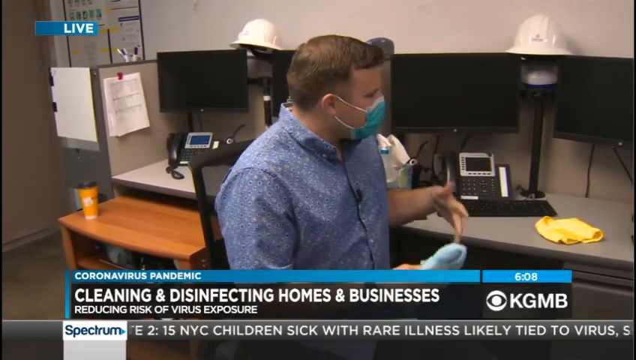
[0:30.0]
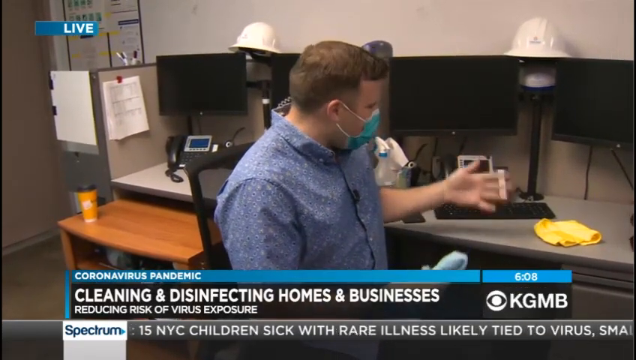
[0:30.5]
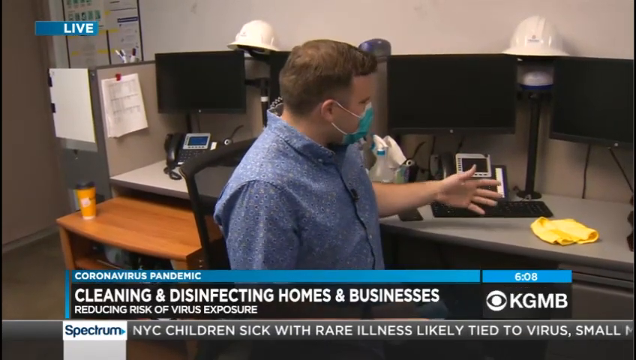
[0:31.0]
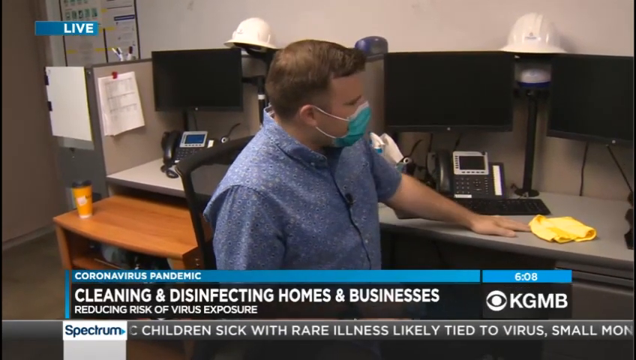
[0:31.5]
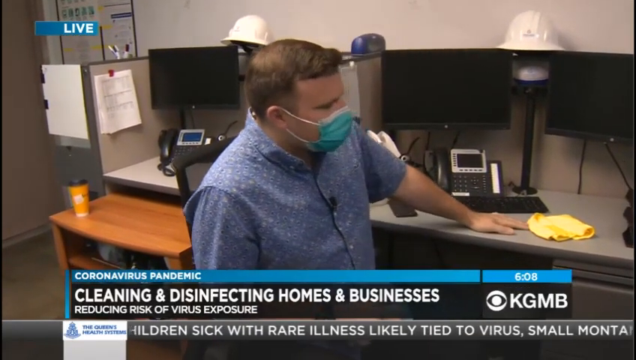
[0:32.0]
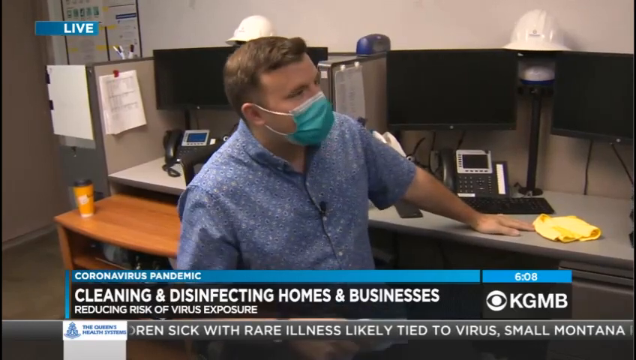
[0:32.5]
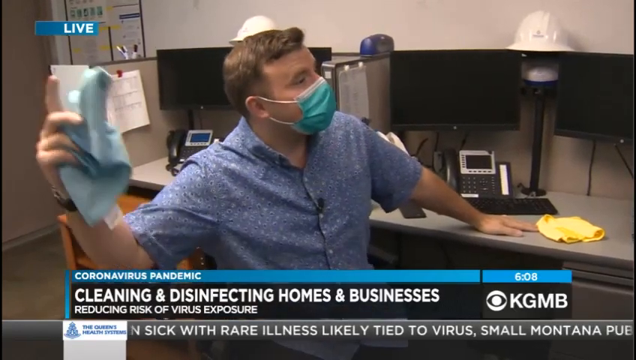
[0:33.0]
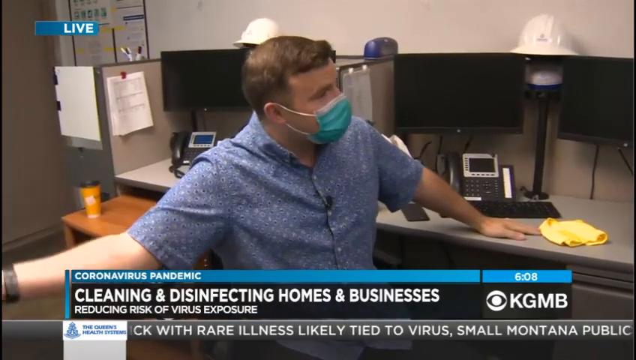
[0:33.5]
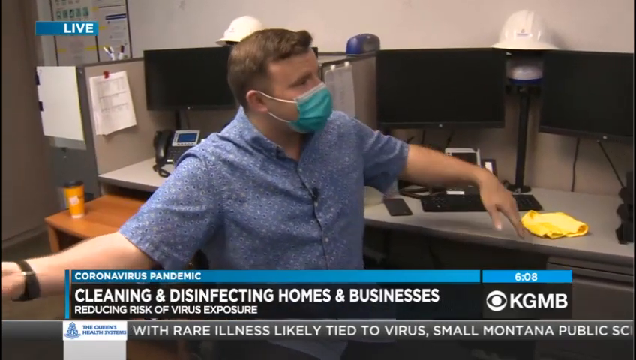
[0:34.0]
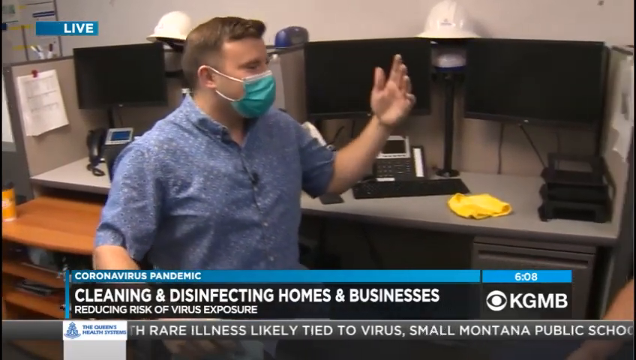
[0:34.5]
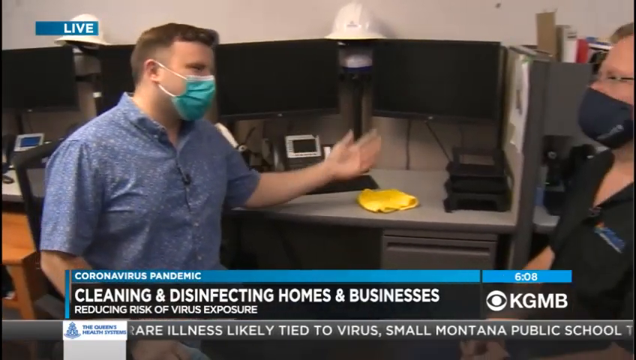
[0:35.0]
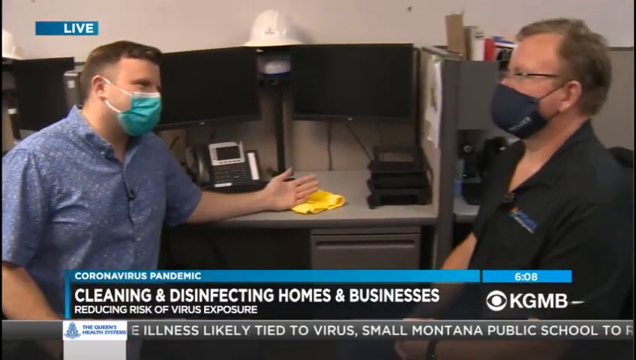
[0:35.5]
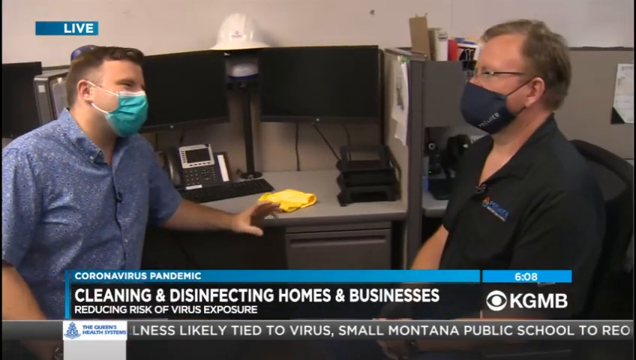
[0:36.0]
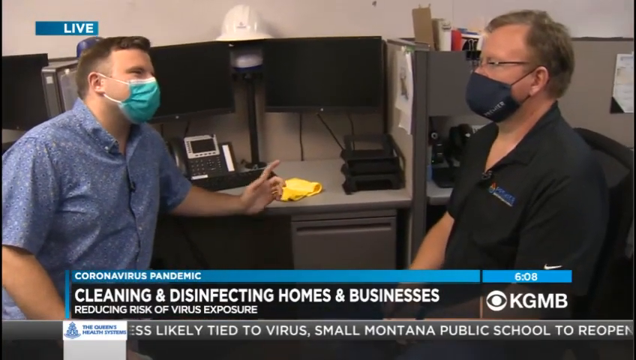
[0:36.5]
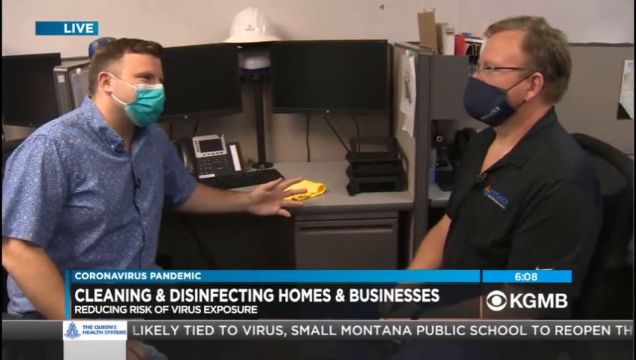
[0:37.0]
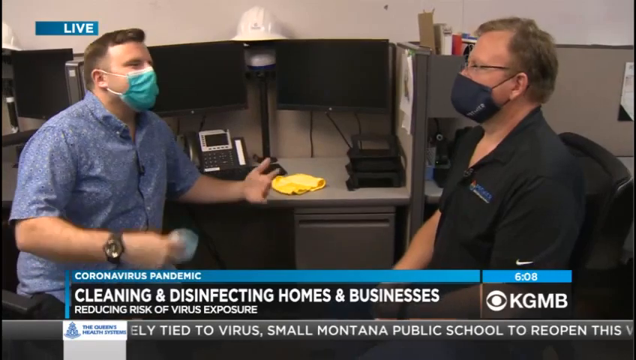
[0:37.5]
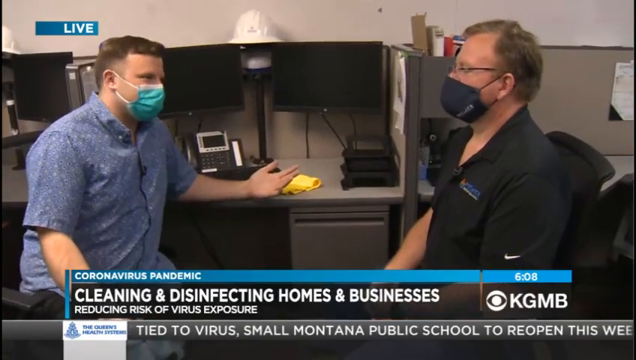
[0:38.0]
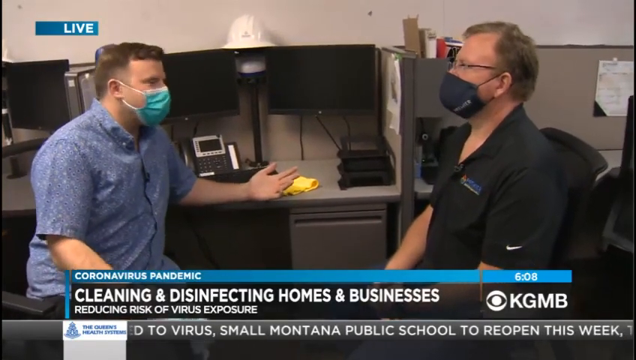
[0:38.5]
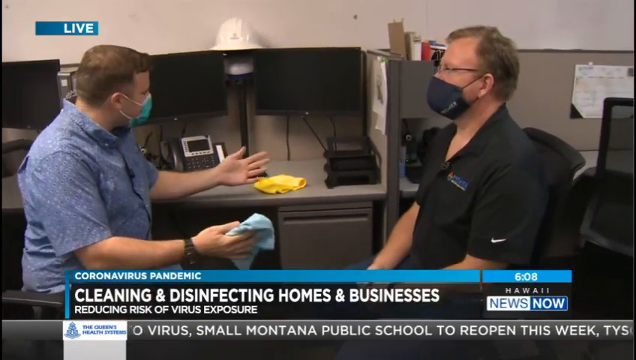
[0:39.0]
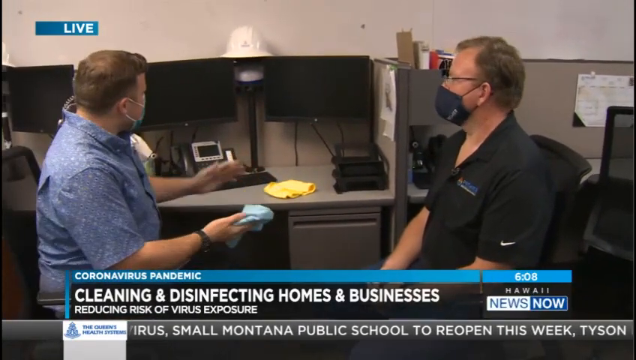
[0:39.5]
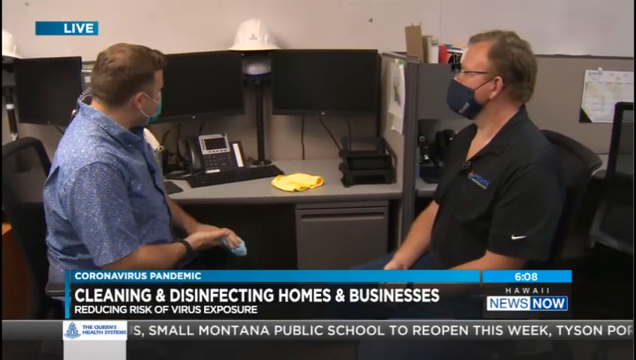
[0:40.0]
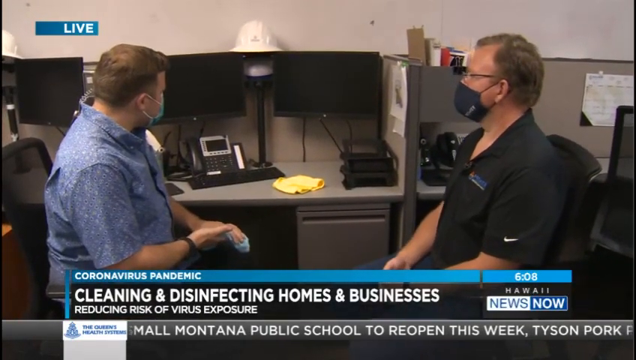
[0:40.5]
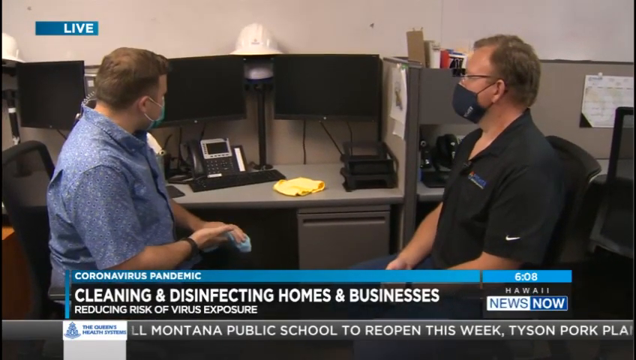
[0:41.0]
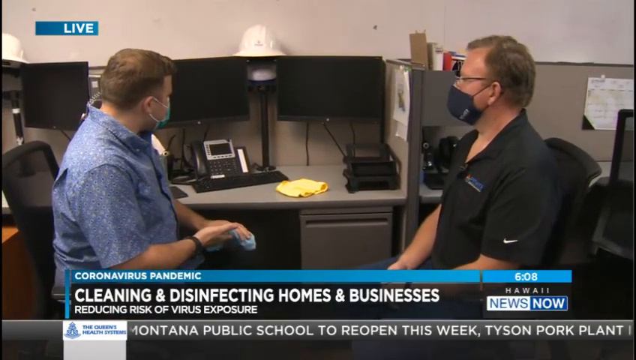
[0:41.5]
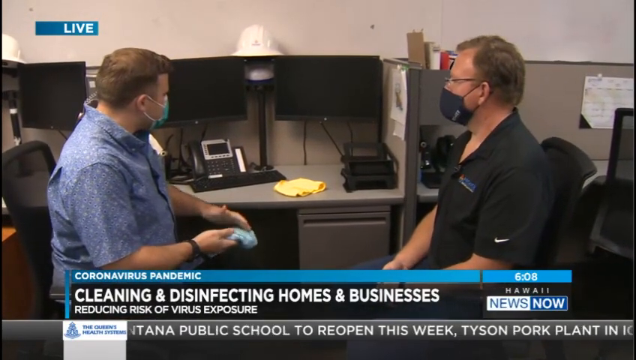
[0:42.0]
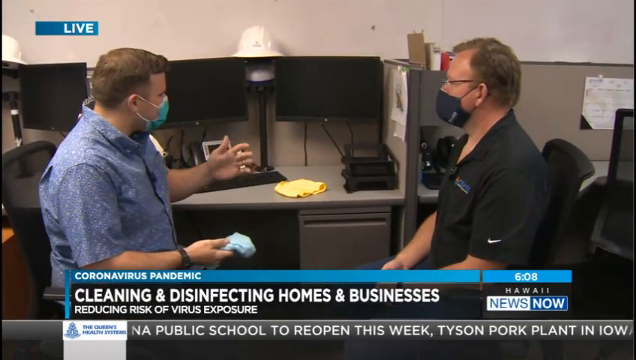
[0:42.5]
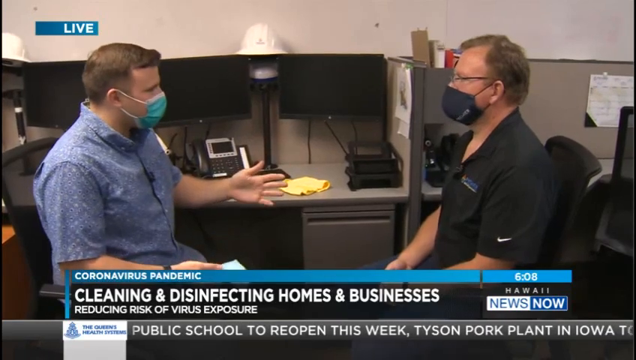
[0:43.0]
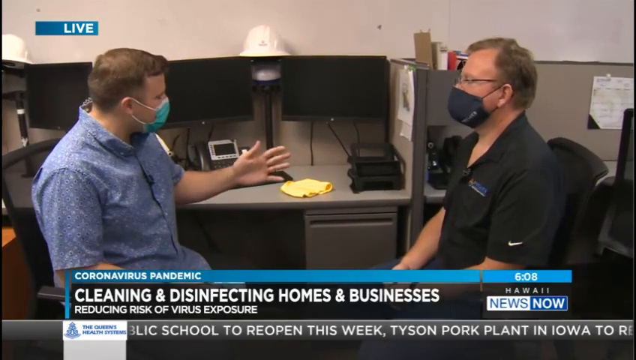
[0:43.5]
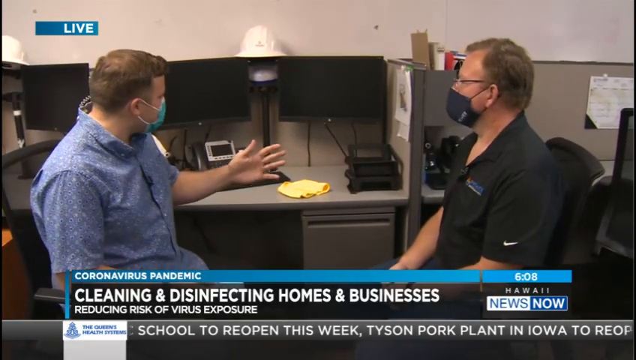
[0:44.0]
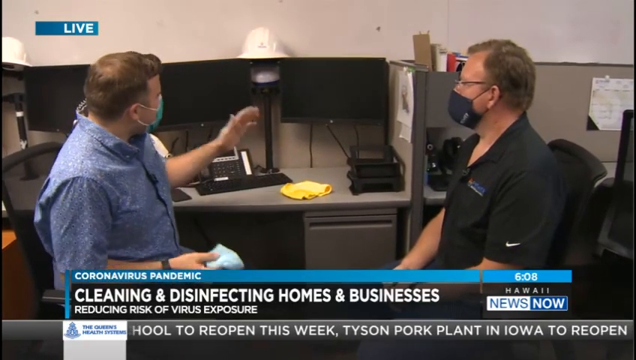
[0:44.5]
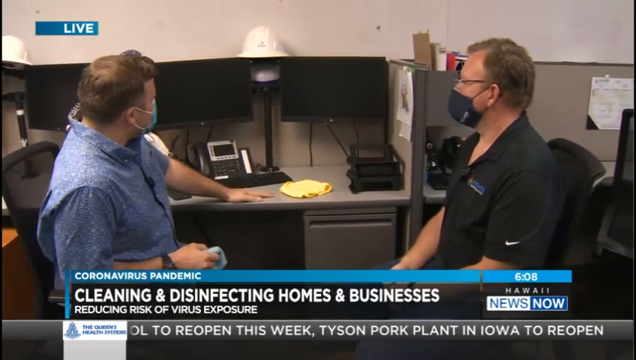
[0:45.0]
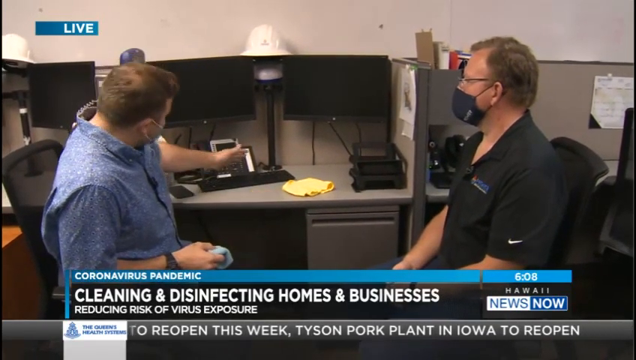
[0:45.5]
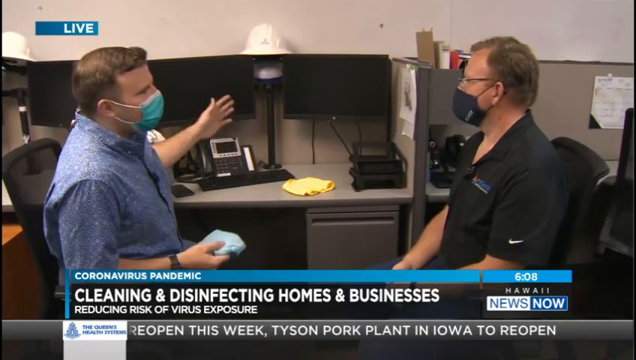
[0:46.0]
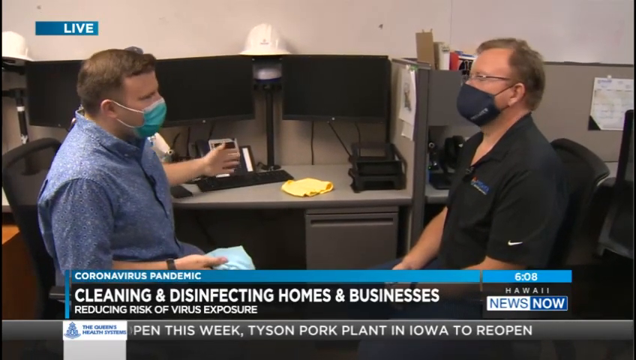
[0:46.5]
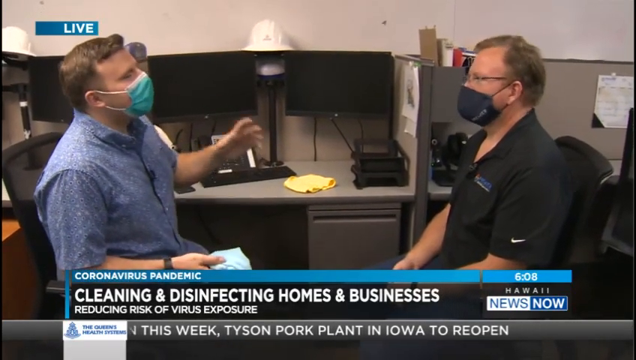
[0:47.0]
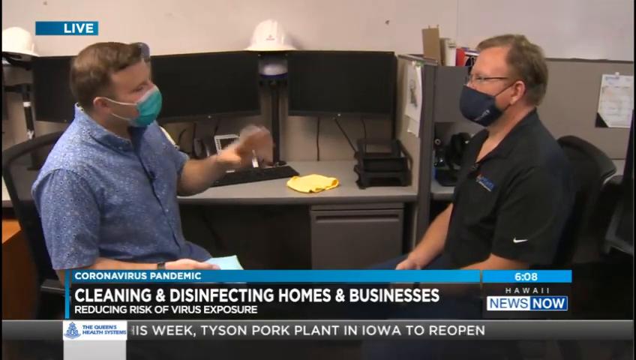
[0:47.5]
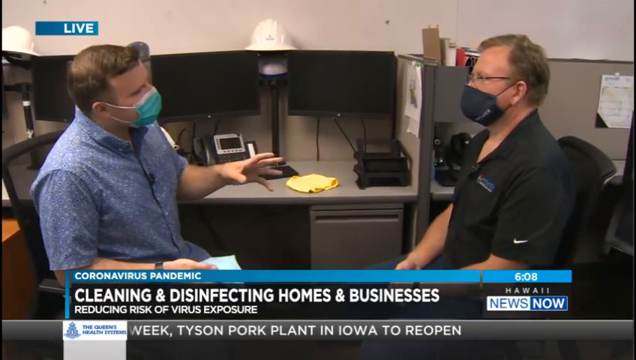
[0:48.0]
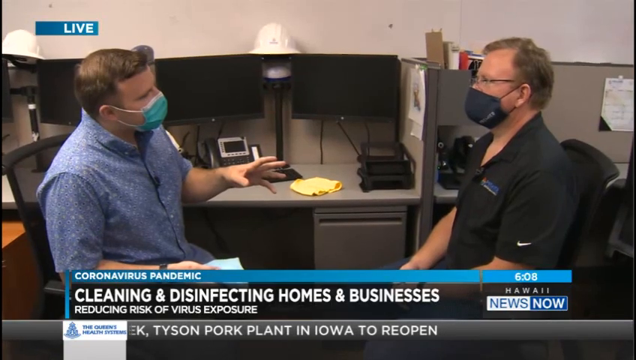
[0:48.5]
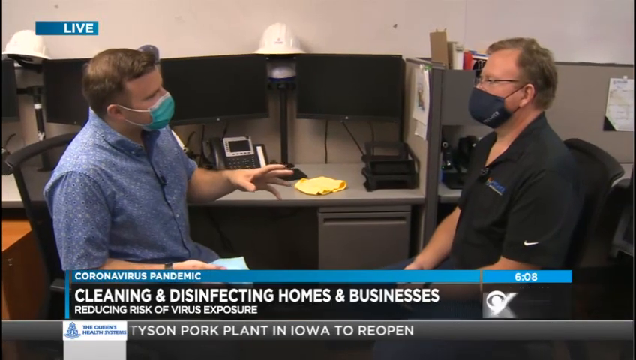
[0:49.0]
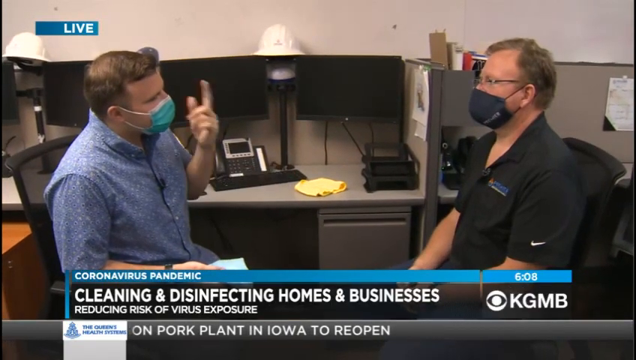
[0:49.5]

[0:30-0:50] The man remains full screen in the indoor setting, with several computer monitors, telephones and a desk behind him. He wears a face mask. The view then reveals more of the right side of the frame, where another man, also wearing a face mask, is sitting in front of him. The first man keeps speaking and making hand gestures. News updates along the bottom center of the screen read "travel may not resume until 2021", "Update 2", "15 NYC children sick with rare illness likely tied to virus", "Small Montana public school to reopen this week" and "Tyson pork plant in Iowa to reopen". The video is rectangular and filmed indoors with plenty of artificial light, keeping everything clear and visible.